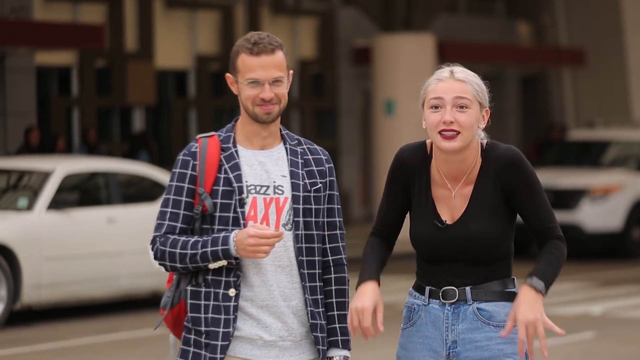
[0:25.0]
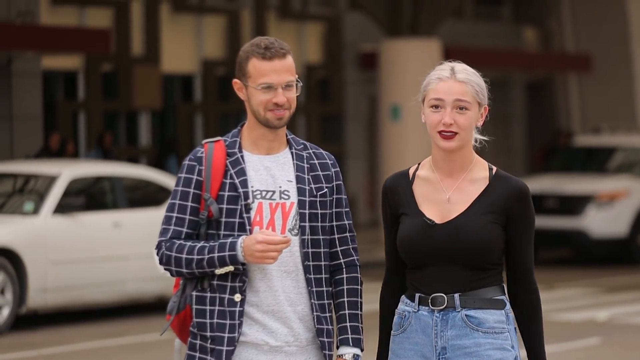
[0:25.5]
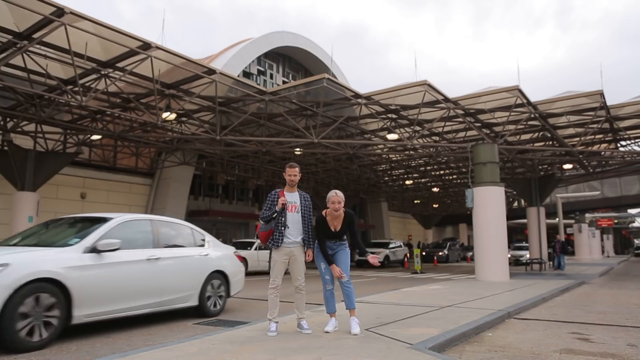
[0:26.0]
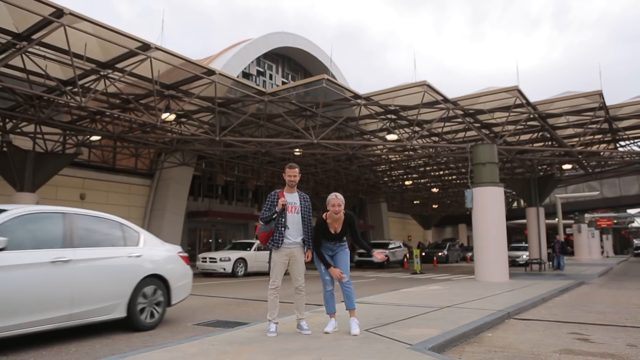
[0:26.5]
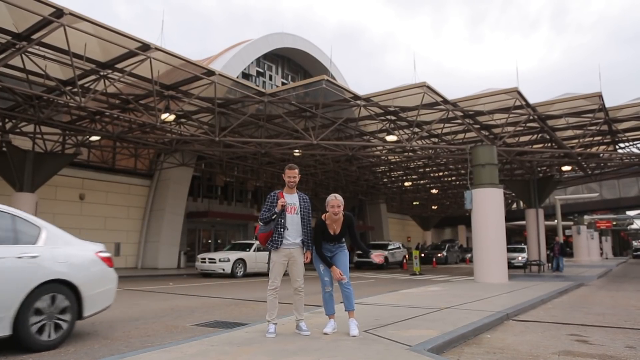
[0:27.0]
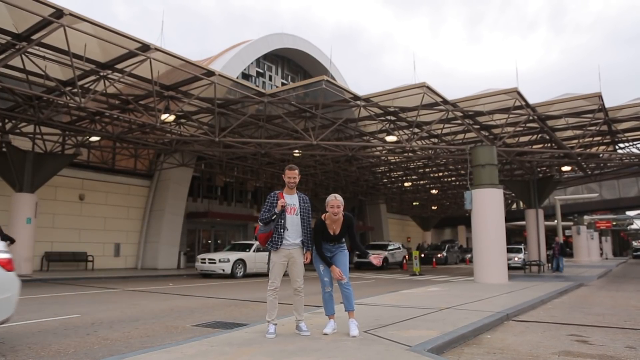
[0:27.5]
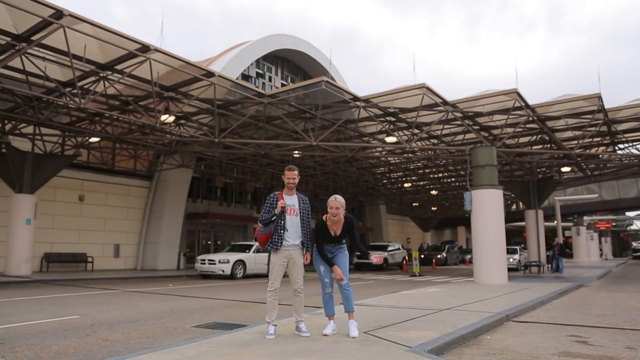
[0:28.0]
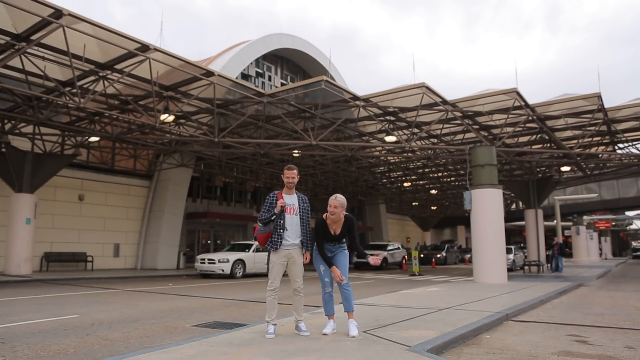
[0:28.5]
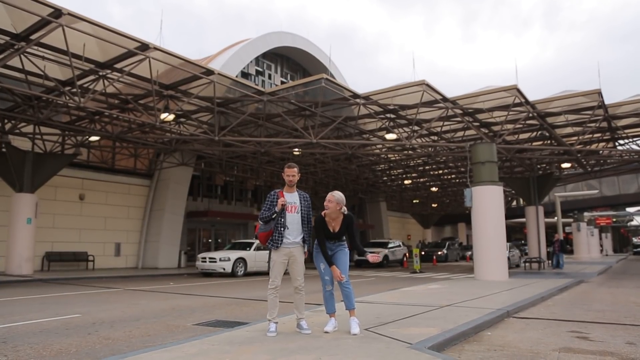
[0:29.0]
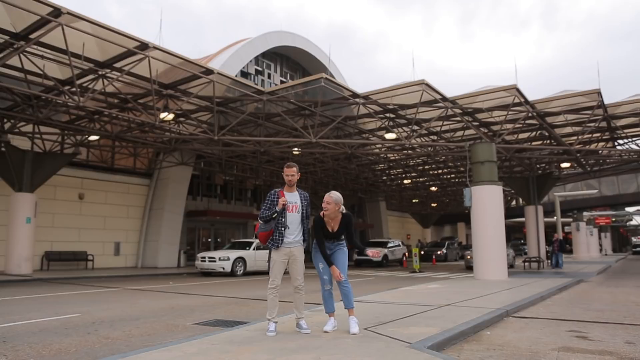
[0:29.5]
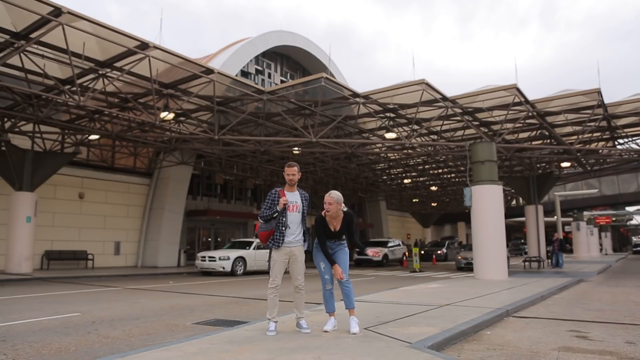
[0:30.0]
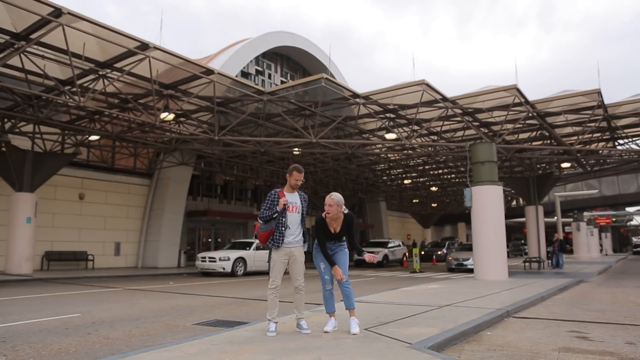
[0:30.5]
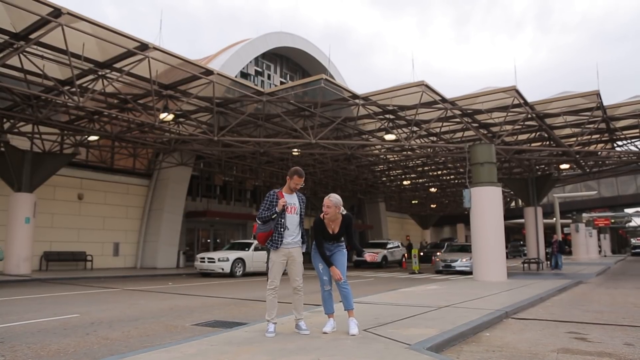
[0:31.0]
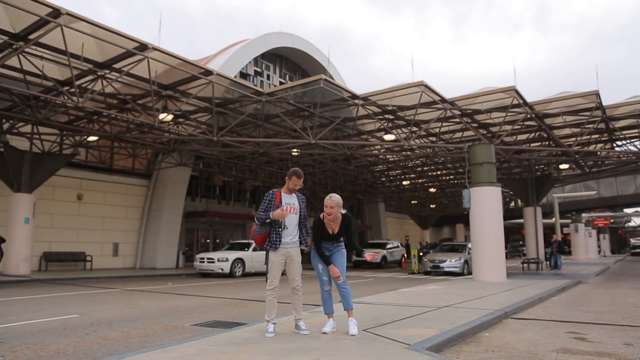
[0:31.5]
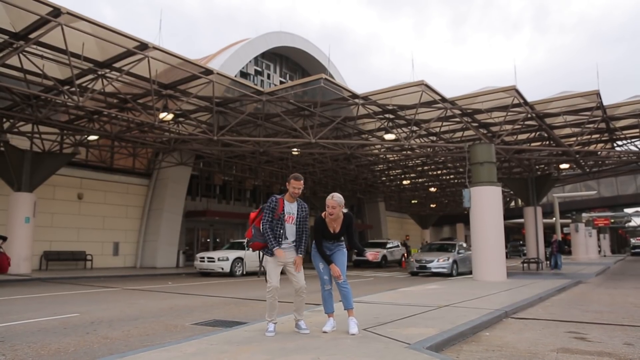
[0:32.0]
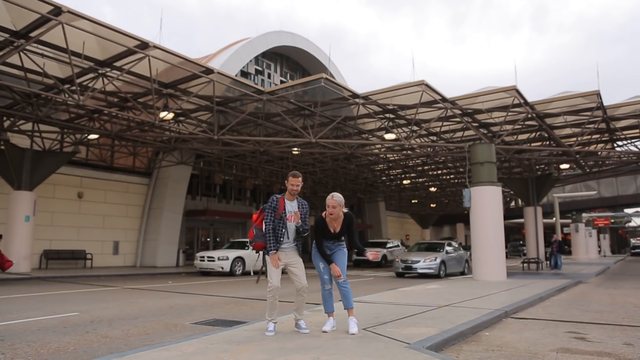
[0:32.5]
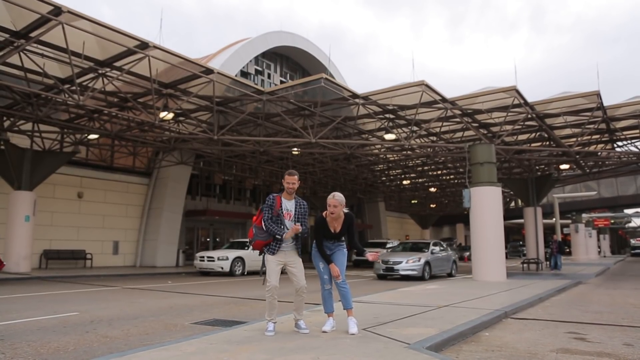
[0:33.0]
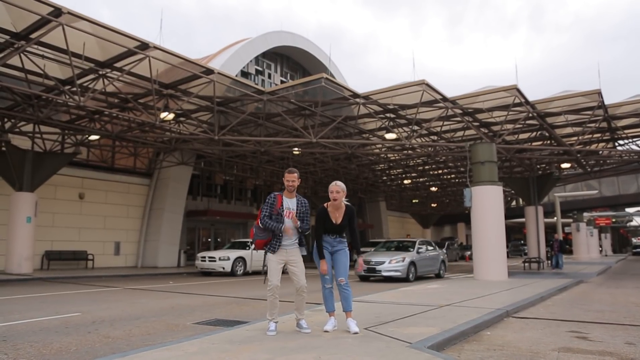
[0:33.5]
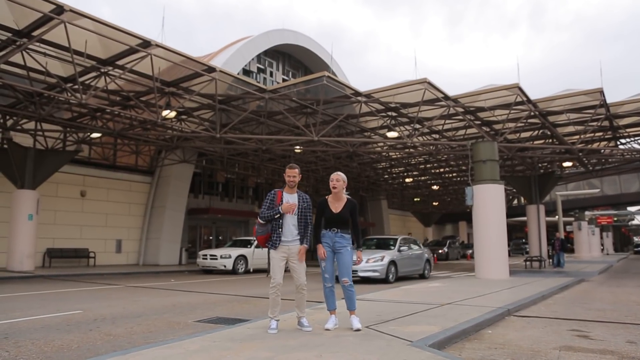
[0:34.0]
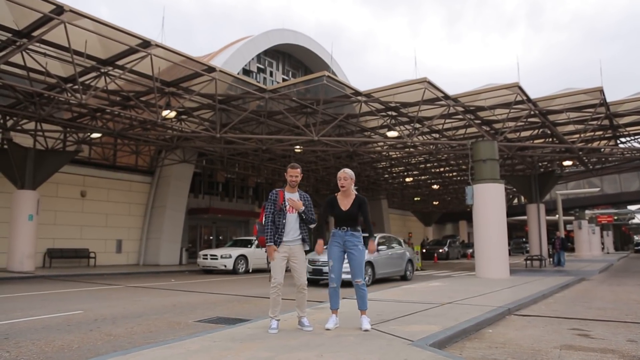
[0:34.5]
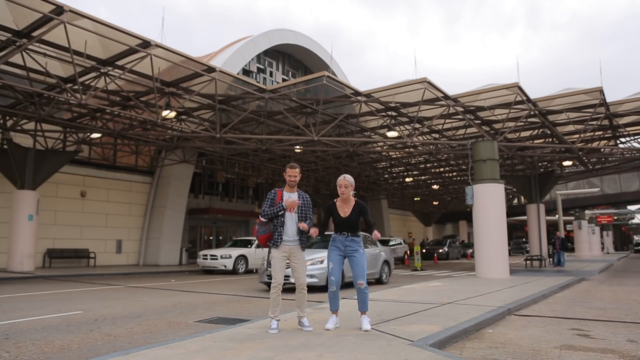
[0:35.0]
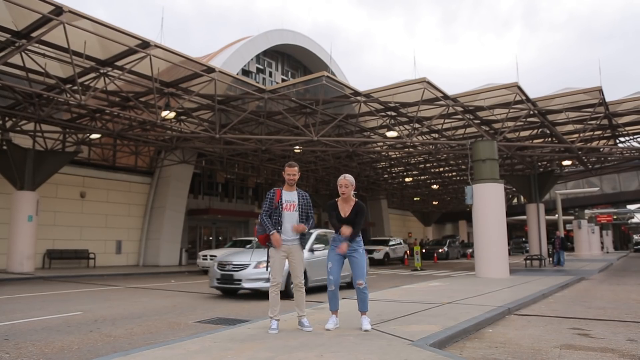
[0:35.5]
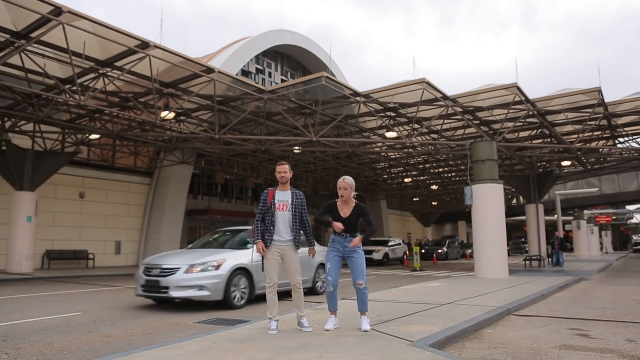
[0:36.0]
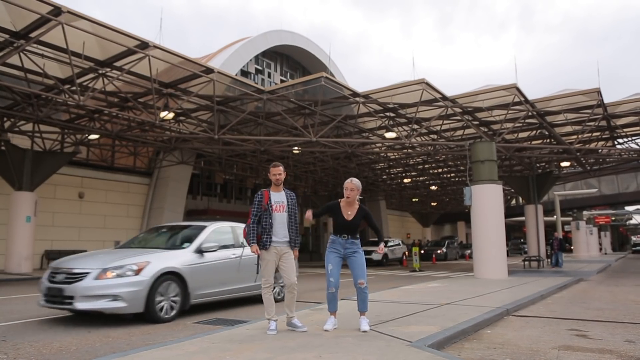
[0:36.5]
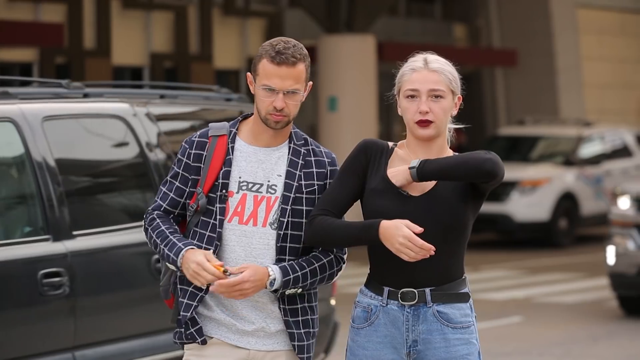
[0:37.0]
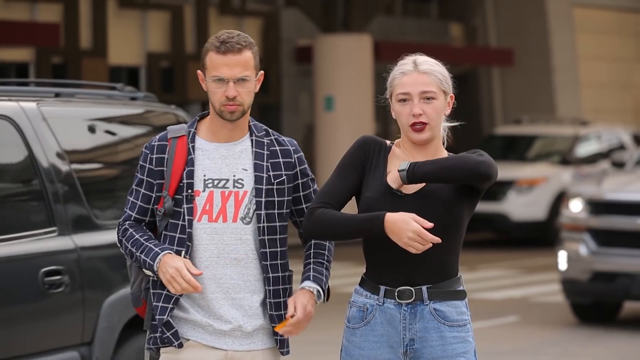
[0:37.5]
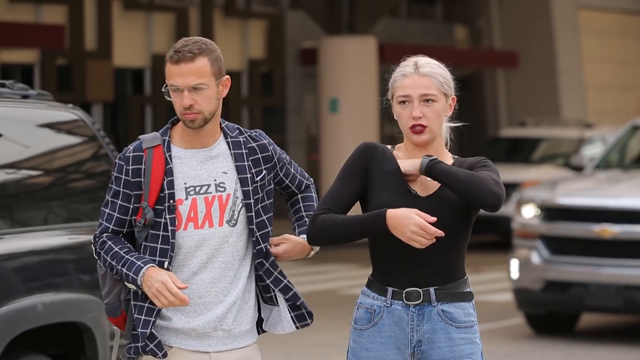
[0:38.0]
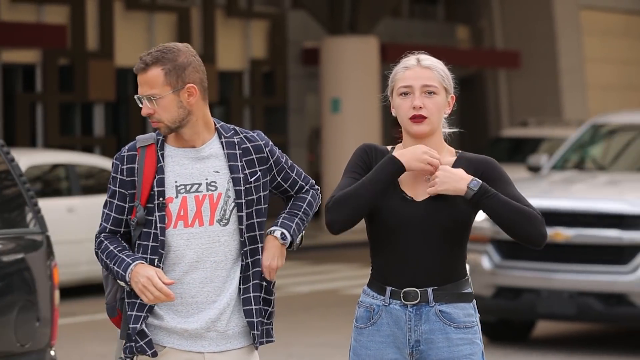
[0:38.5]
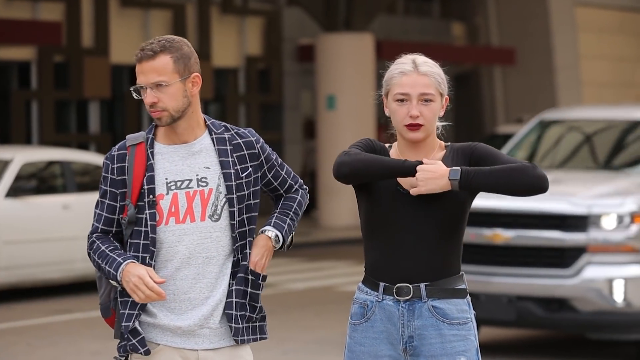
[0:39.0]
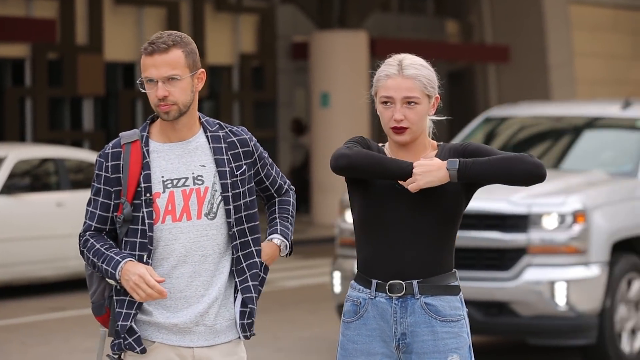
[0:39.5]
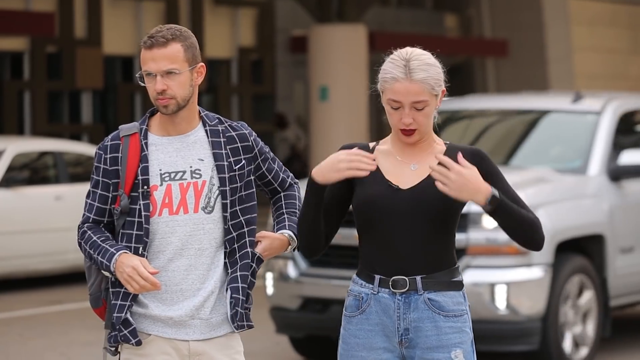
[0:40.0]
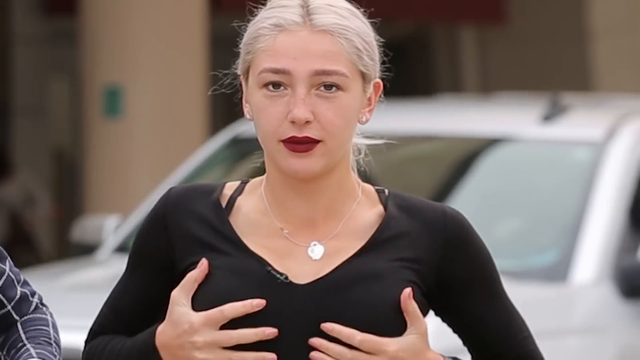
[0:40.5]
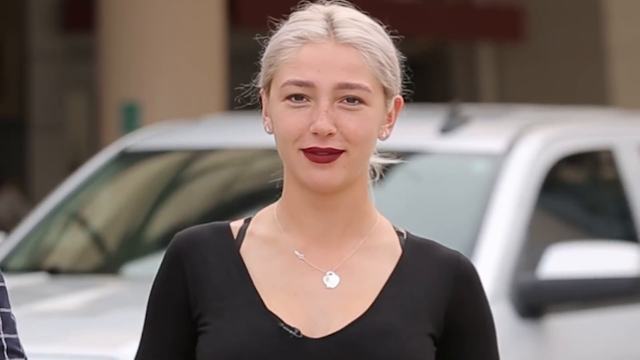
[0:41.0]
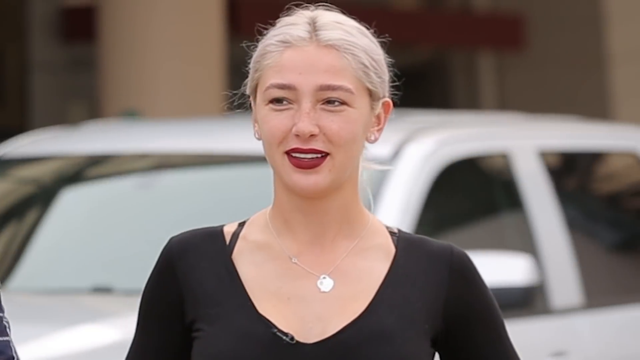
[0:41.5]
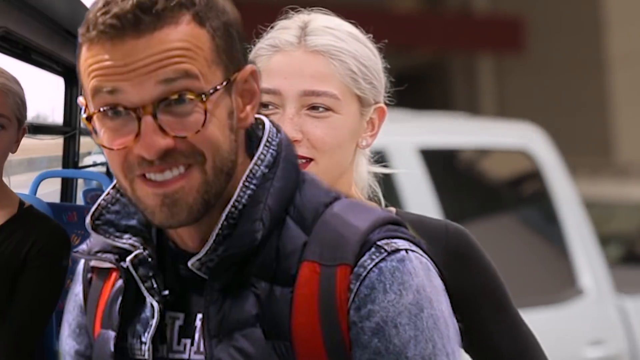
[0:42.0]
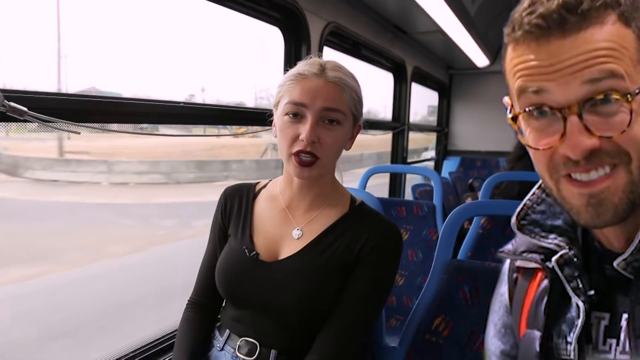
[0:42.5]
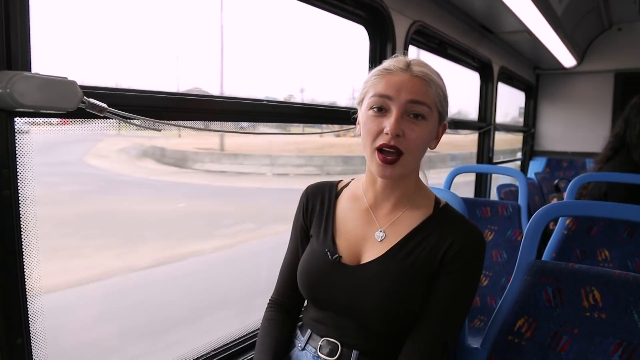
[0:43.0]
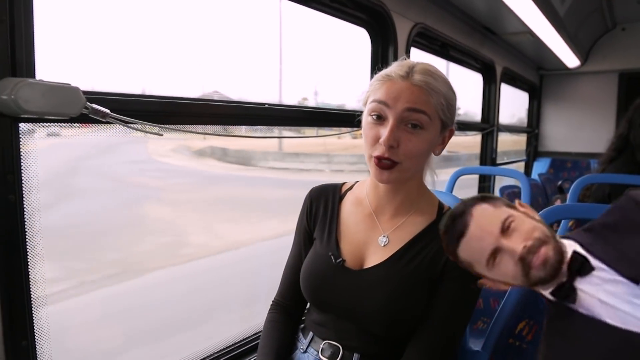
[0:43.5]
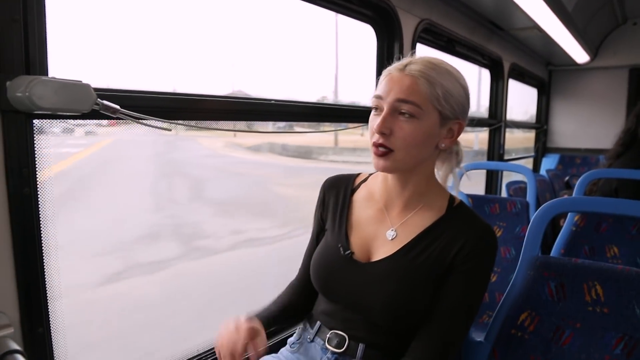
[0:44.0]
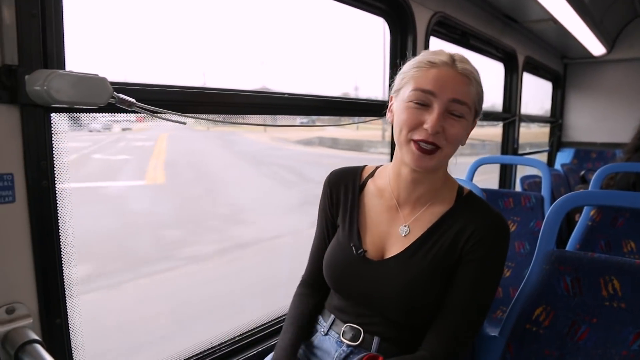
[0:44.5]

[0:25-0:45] A man perhaps in his 30s, with short brown hair, a short brown beard and glasses, wears a t-shirt with a blue and white plaid shirt over it, khaki pants and sneakers, with a bright red backpack over his right shoulder. Beside him is a woman in jeans, white sneakers, a black belt and a black long-sleeve shirt, with blonde hair pulled back into a ponytail and a small silver necklace with a round symbol on it. They stand on a median in front of a brownish, tannish building, with cars moving behind them; it appears to be an airport where people might be picked up or dropped off. At one point the woman reaches in and adjusts her breasts inside her bra, making sure they are good. The two are then shown seated on what might be a moving train or tram with blue seats.